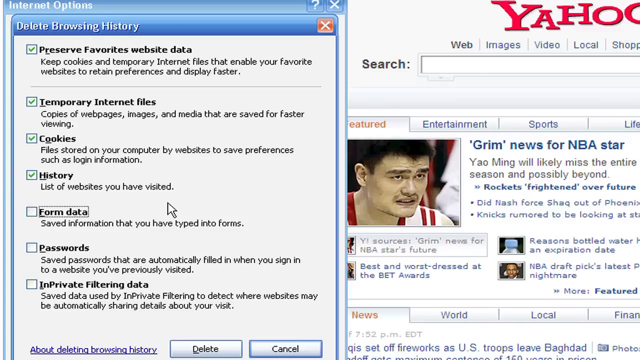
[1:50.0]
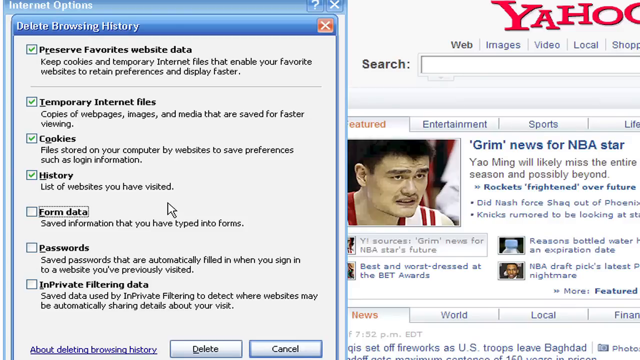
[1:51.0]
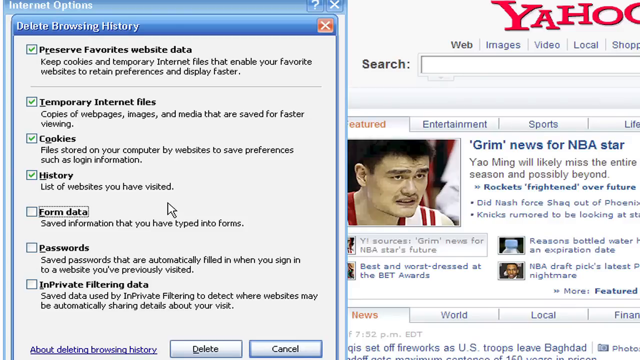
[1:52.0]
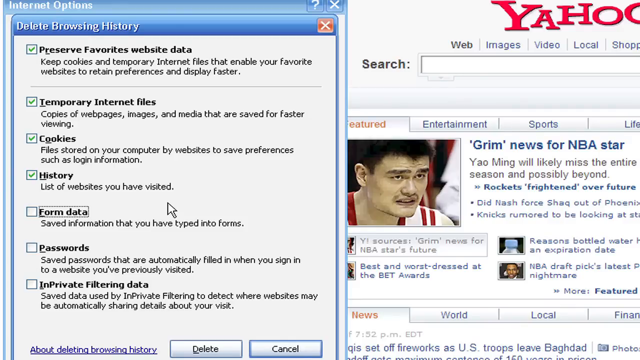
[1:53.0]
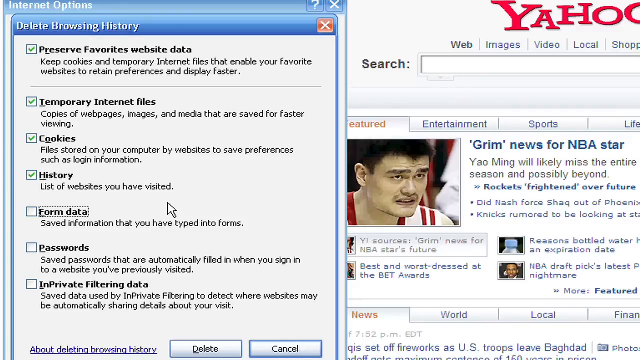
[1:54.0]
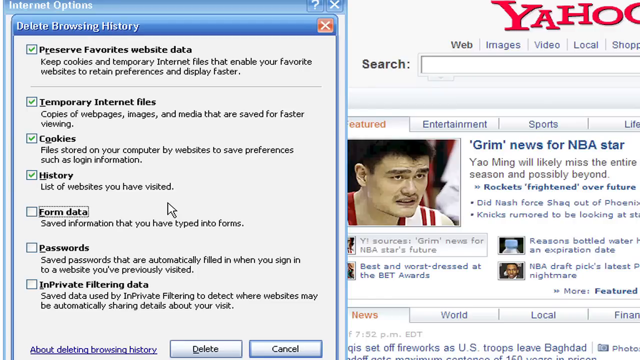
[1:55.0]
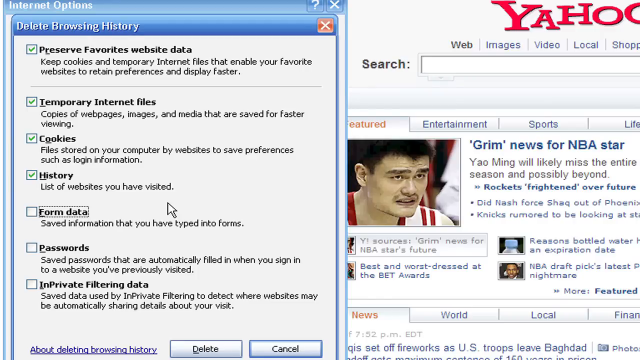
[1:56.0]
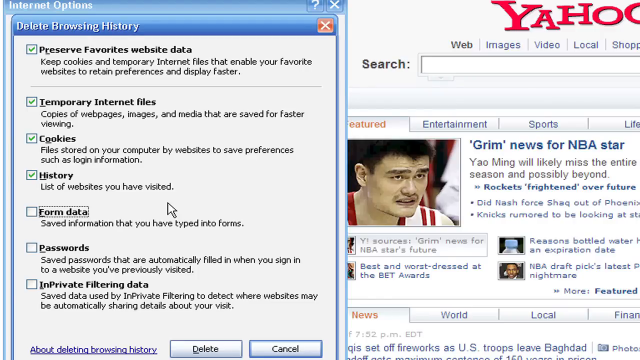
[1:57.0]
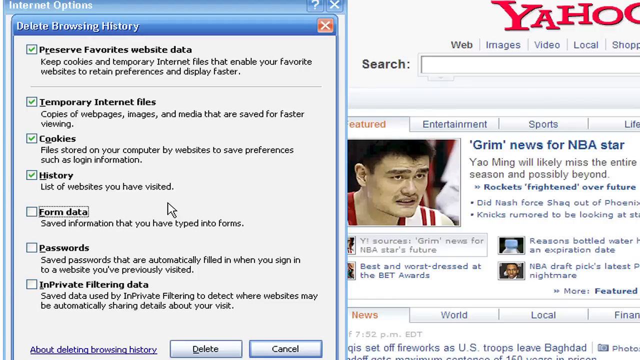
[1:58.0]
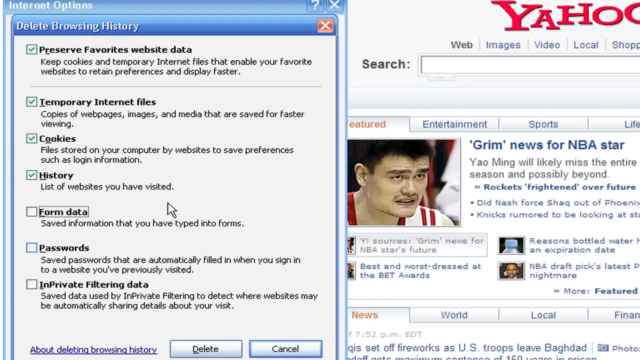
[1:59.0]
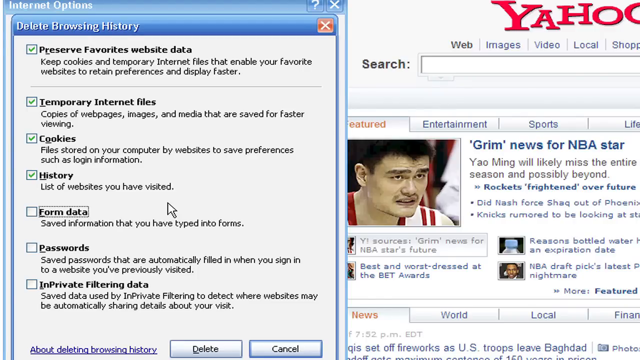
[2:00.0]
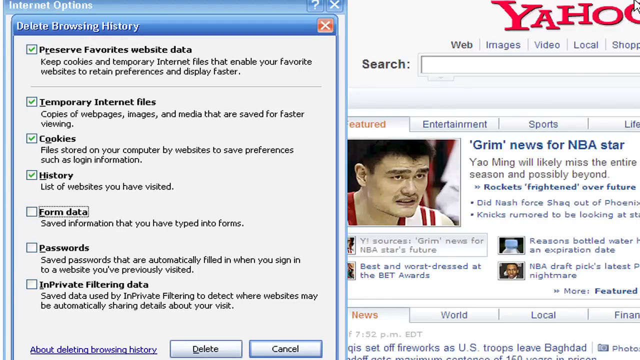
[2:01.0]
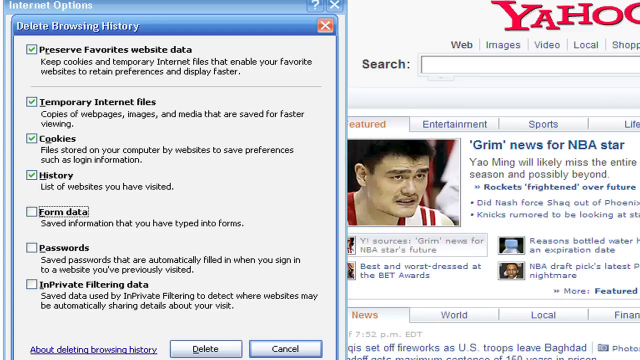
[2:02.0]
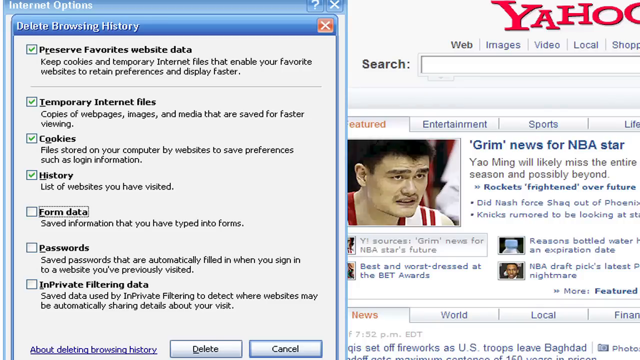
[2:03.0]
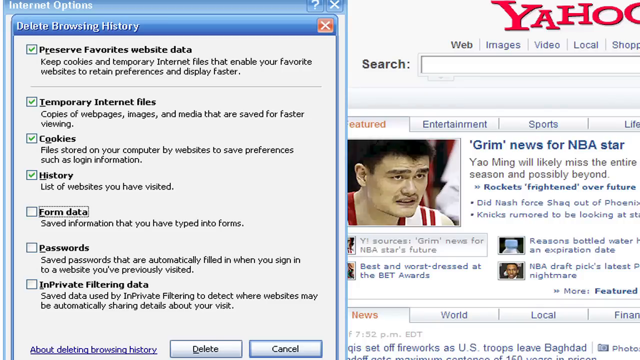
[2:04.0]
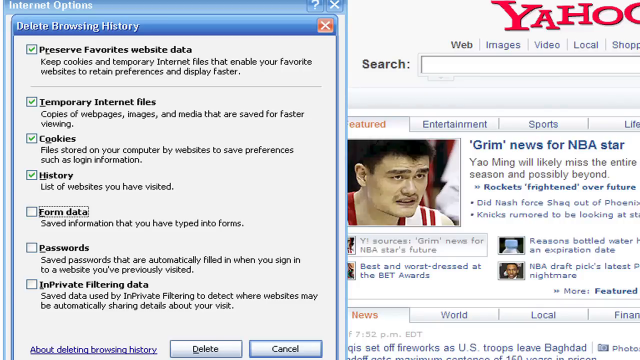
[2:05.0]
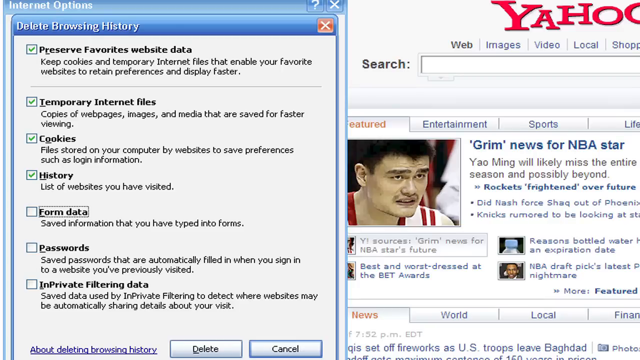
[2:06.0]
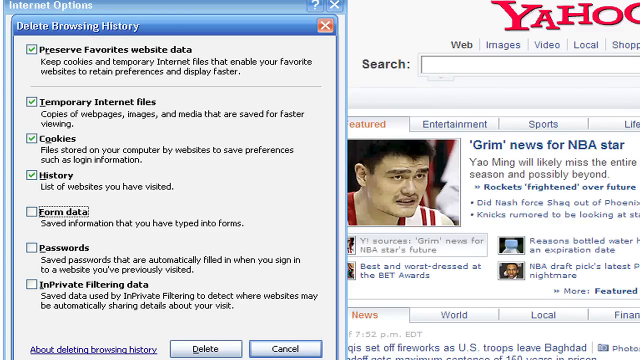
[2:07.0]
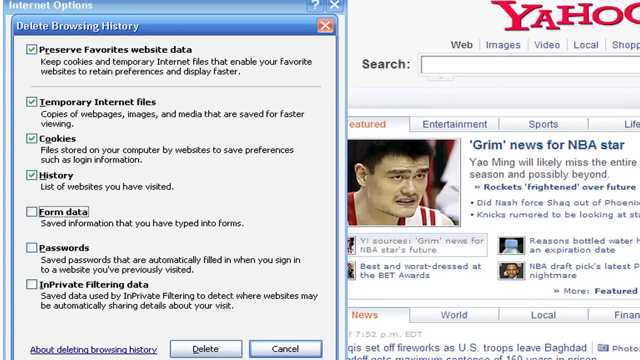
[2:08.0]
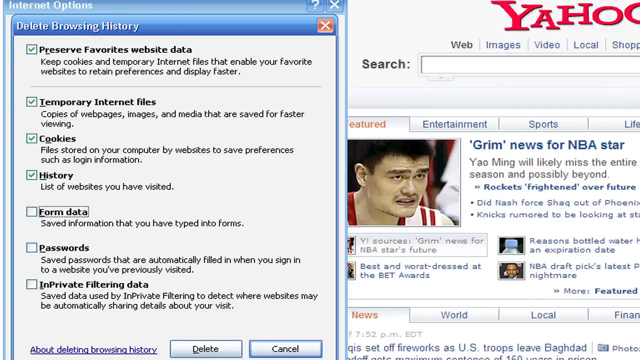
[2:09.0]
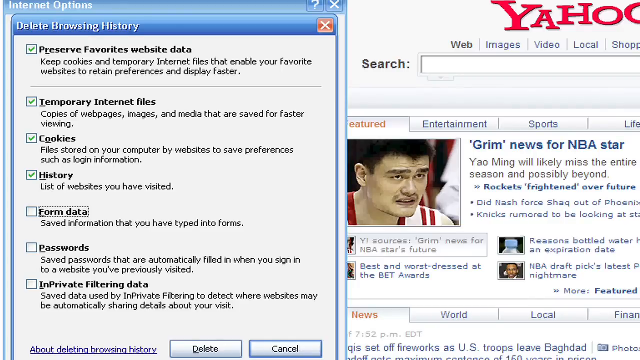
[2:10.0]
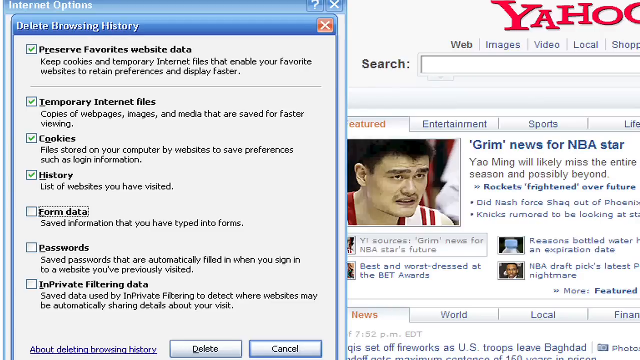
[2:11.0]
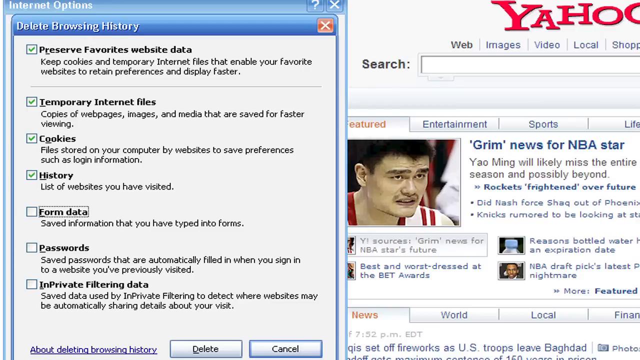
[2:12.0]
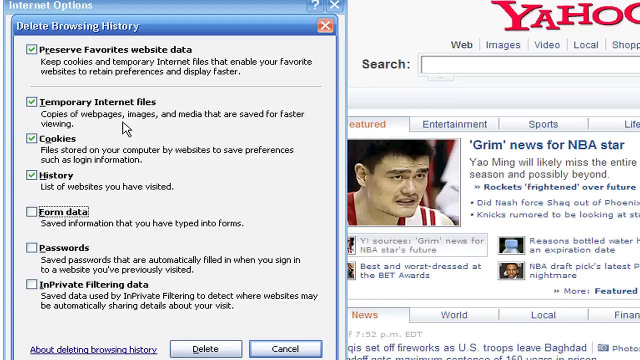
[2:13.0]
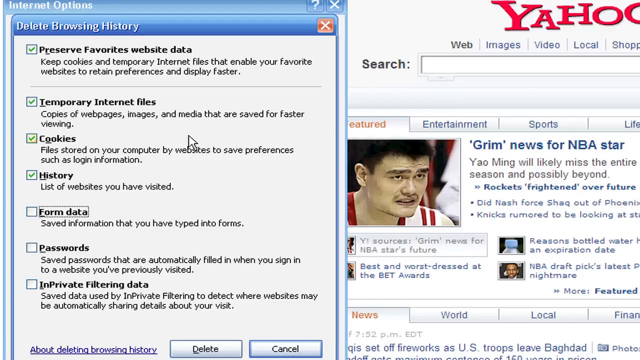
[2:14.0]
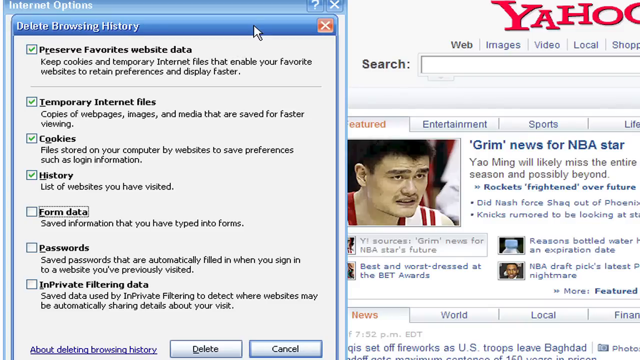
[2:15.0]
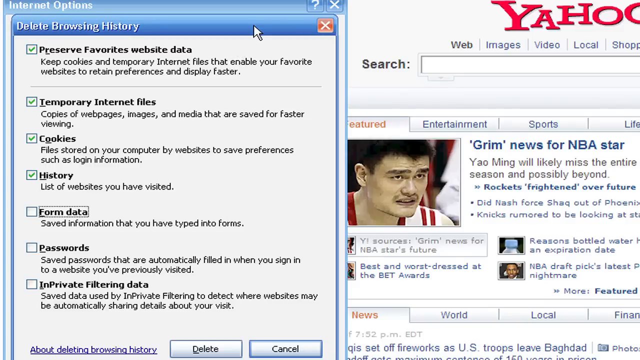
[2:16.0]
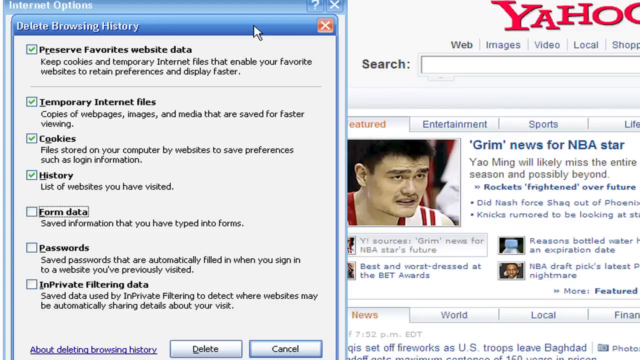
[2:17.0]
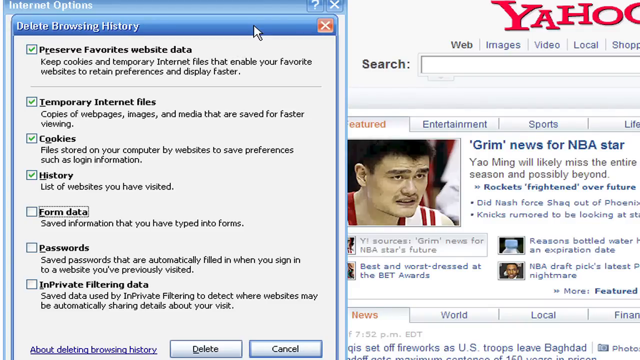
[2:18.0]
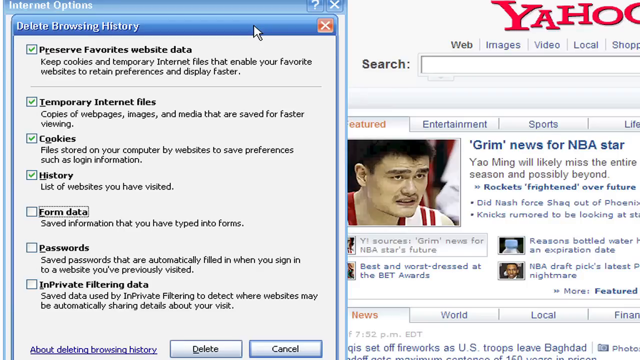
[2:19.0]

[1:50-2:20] The person keeps waiting on the Delete Browsing History options without moving for some time, with some boxes unchecked. Green checkmarks are next to Preserve Favorites Website Data, Temporary Internet Files, Cookies and History, while Form Data, Passwords and InPrivate Filtering Data are unchecked. Under History is the text "list of websites you have visited". The mouse moves slightly to another part of the window. At the bottom it reads "About deleting browsing history", with Delete and Cancel as the two options. The person then moves the Delete Browsing History window, goes to the top of it, and takes no action on it.